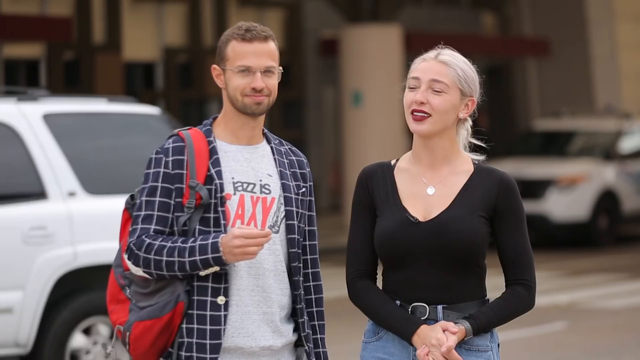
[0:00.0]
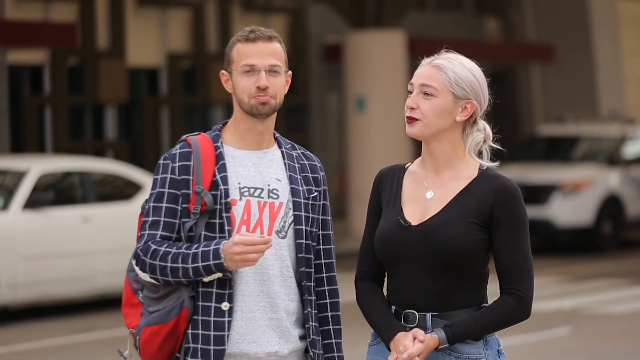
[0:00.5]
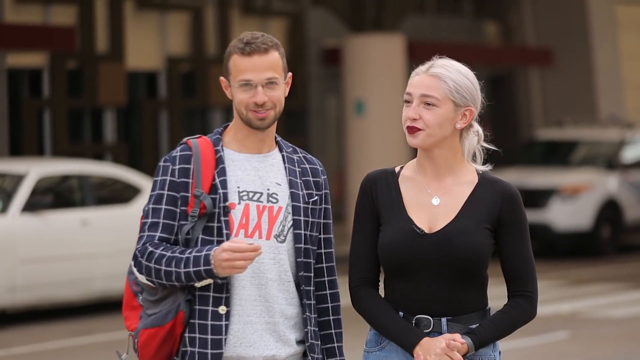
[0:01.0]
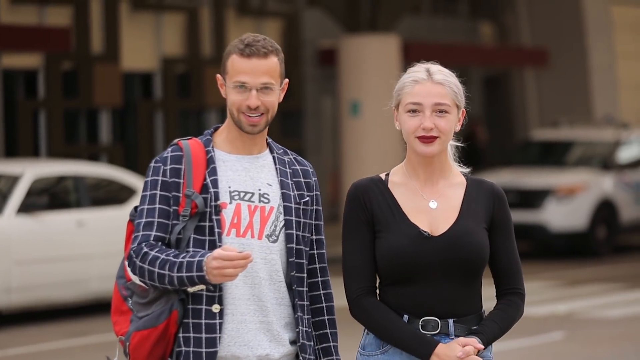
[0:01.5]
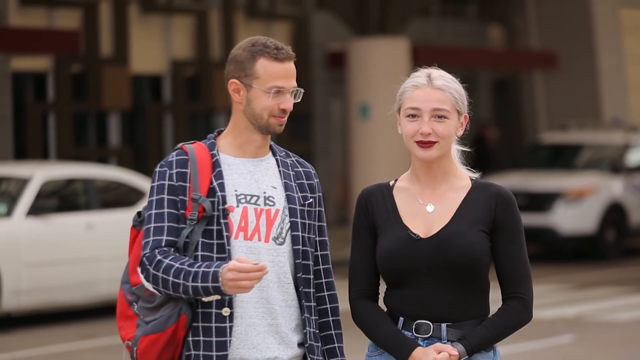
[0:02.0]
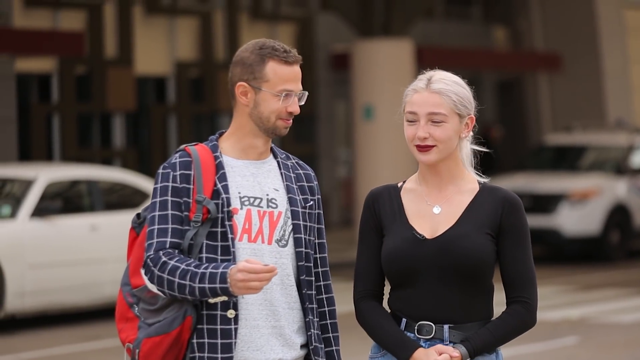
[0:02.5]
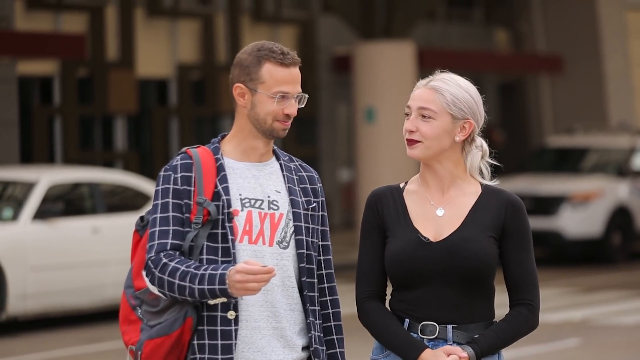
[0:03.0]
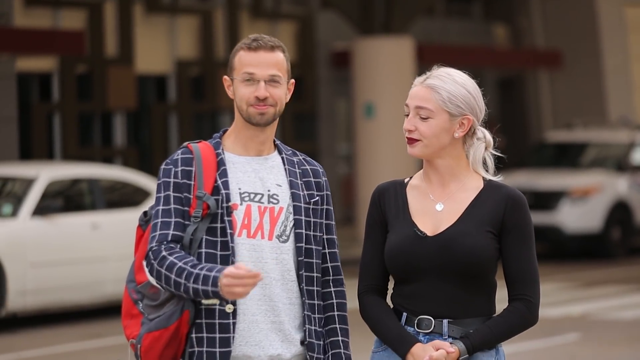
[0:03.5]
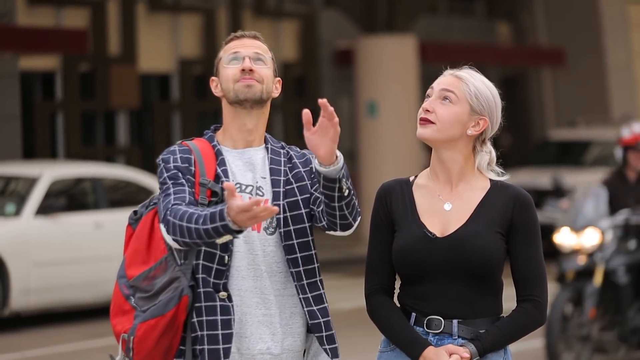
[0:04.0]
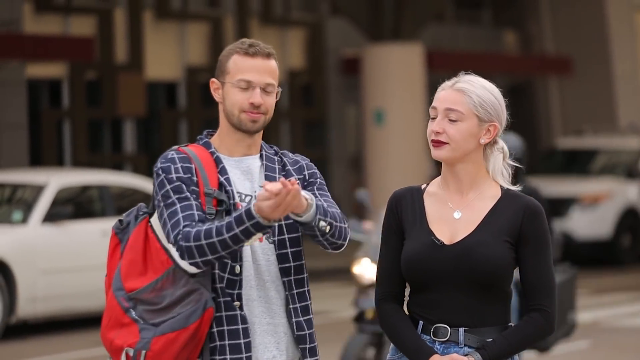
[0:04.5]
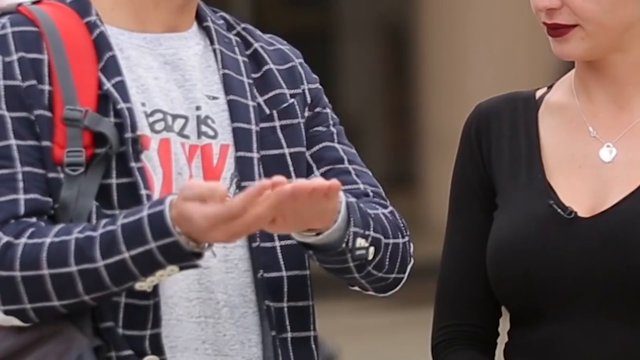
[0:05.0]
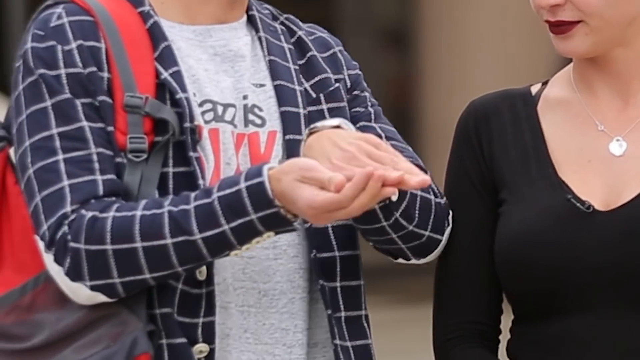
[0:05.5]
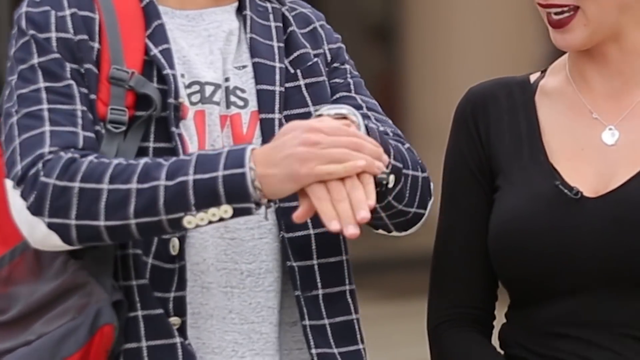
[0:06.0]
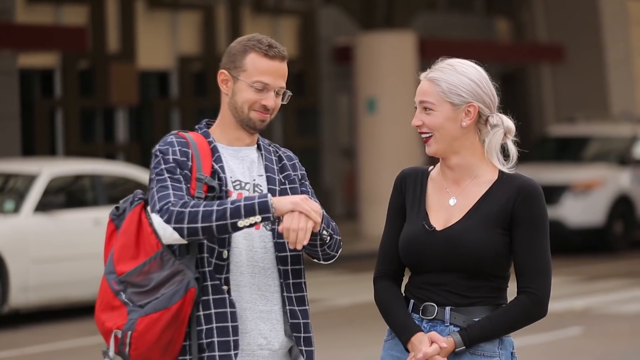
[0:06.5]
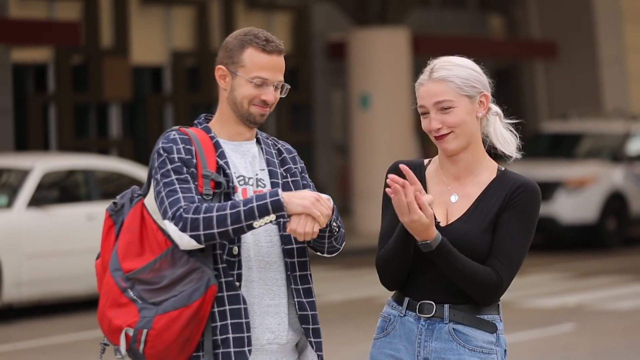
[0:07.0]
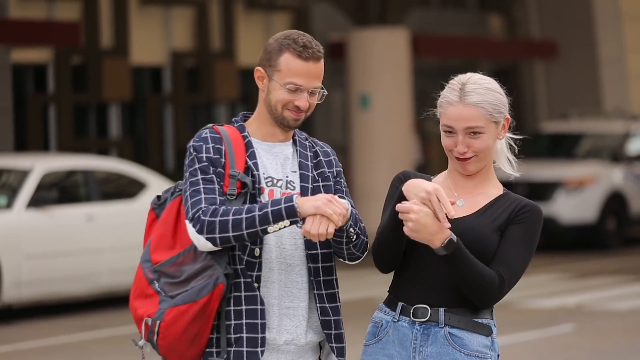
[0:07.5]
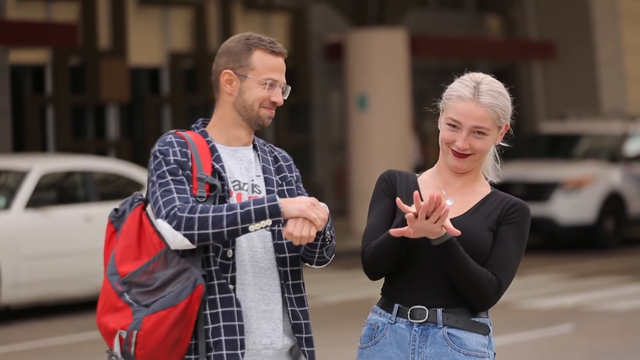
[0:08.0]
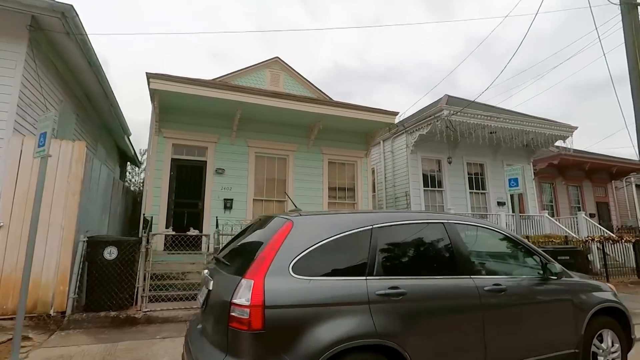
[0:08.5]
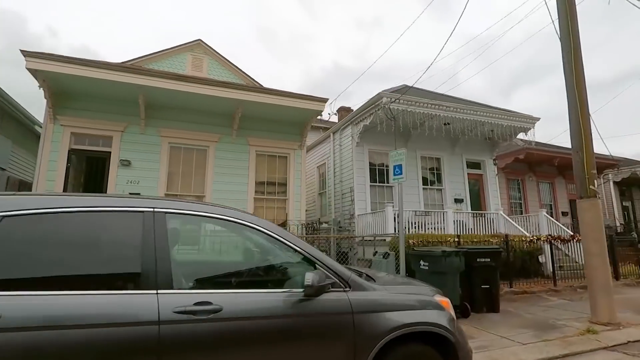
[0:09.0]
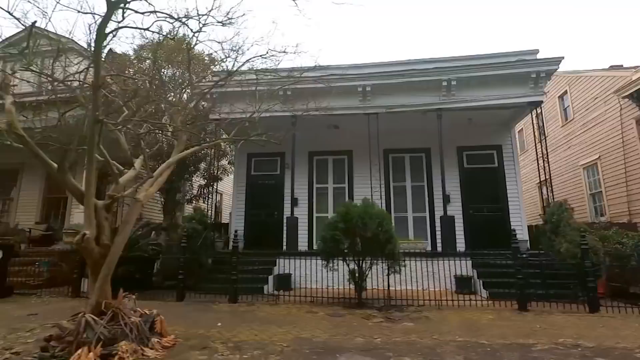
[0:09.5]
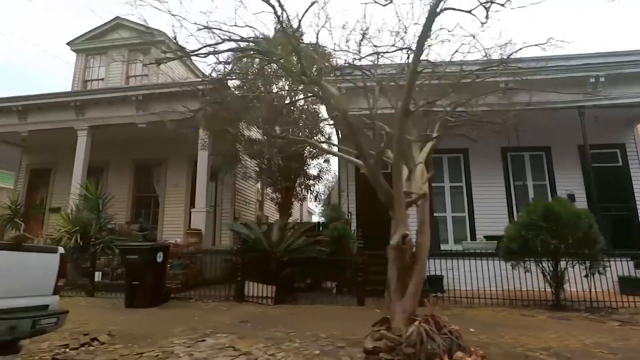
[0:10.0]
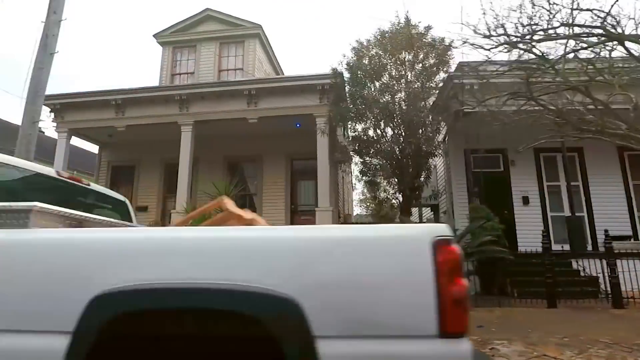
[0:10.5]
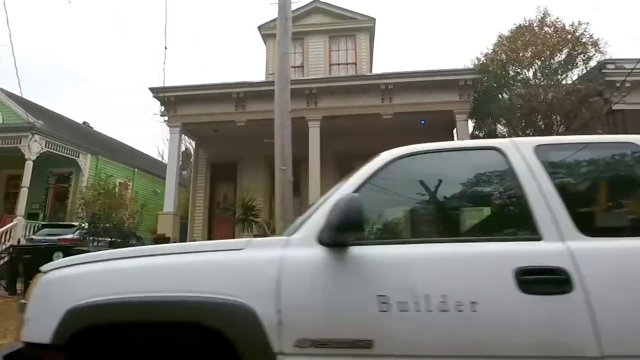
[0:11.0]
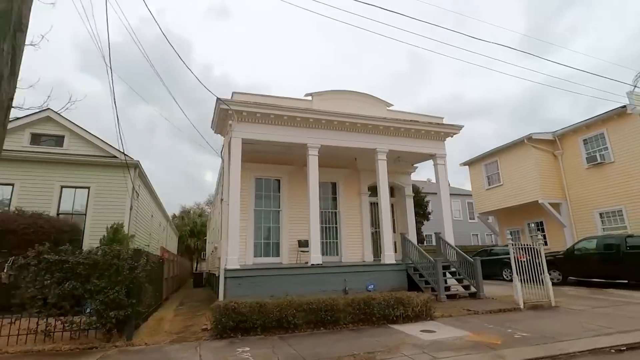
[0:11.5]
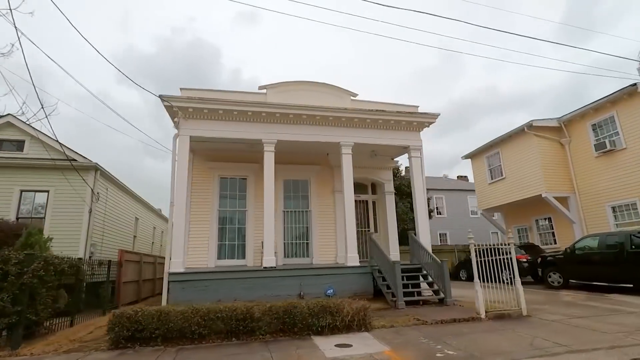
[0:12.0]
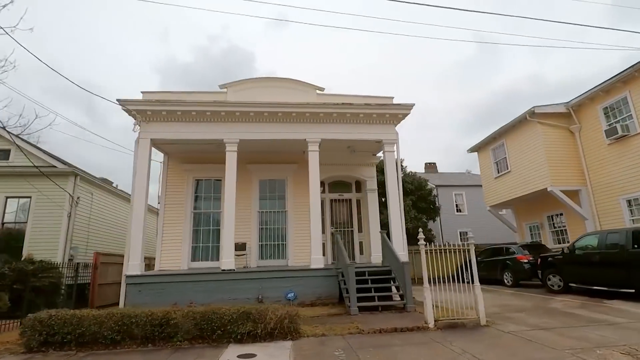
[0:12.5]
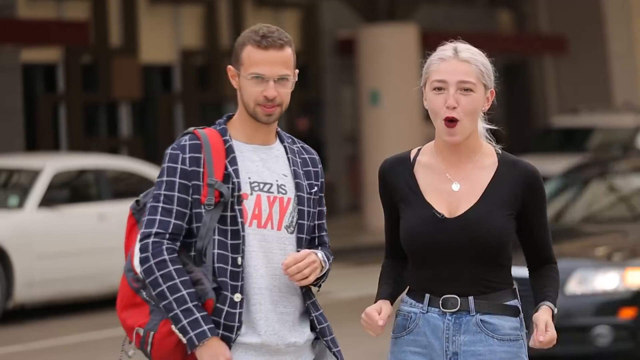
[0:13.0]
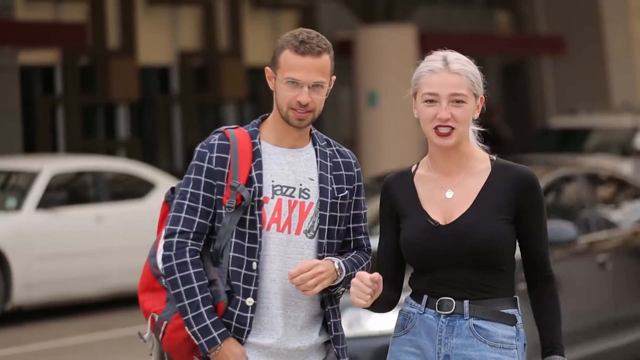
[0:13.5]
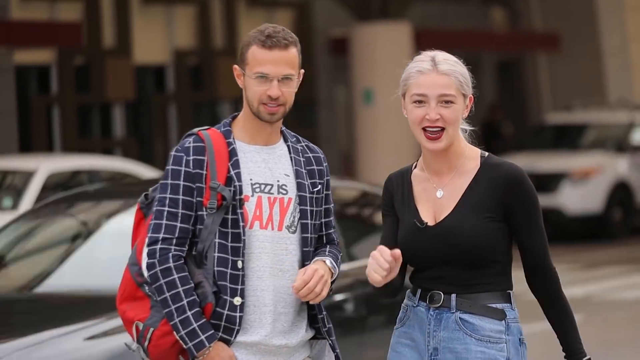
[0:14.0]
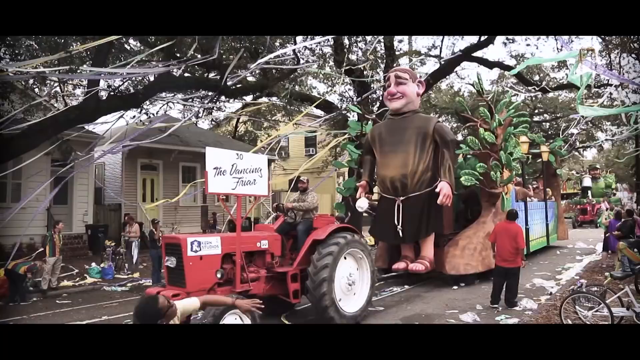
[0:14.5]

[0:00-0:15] Writing in a foreign language appears on the screen; it looks to be perhaps Russian or a similar language. A man who is maybe in his mid-30s, with glasses, short brown hair and a short brown beard, wears a t-shirt under an open navy blue and white plaid shirt, plus a bright red backpack. He flips a coin onto his hand. Beside him is a woman in jeans, a black belt and a black long-sleeve shirt, her blonde hair pulled back into a ponytail; she watches as he flips the coin. The video then shows views of a street with small houses of various colors, apparently filmed by someone driving down the street. The houses look rather modest and mostly upkept. At the end, a truck of some sort pulls what might be a float, and on top of the float is a statue of a monk in brown garb.